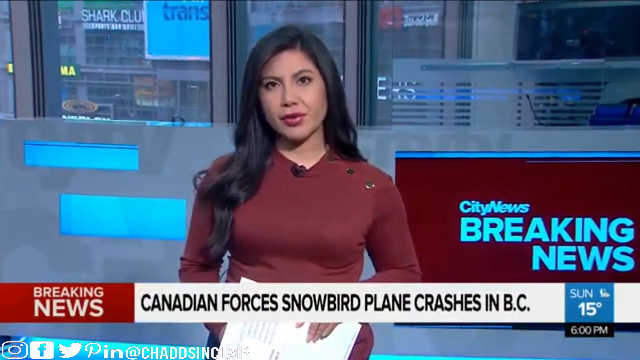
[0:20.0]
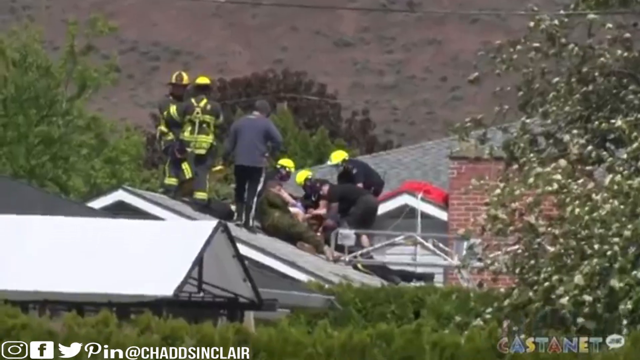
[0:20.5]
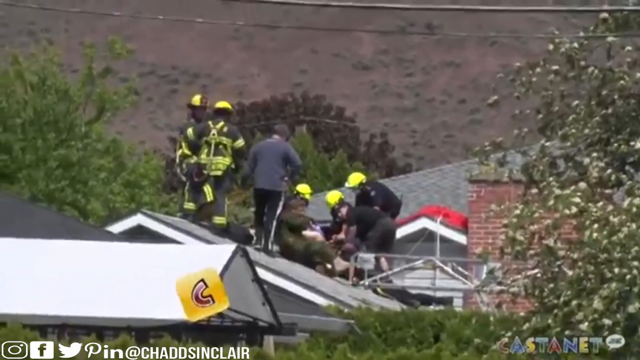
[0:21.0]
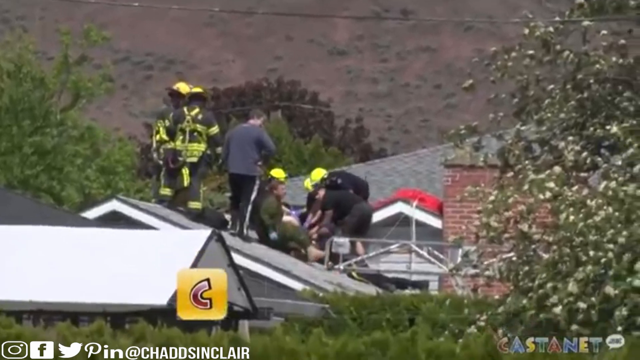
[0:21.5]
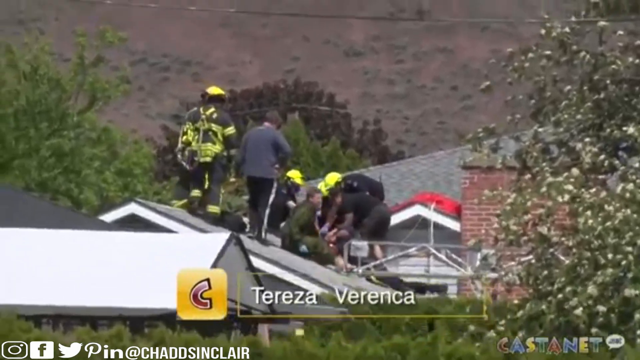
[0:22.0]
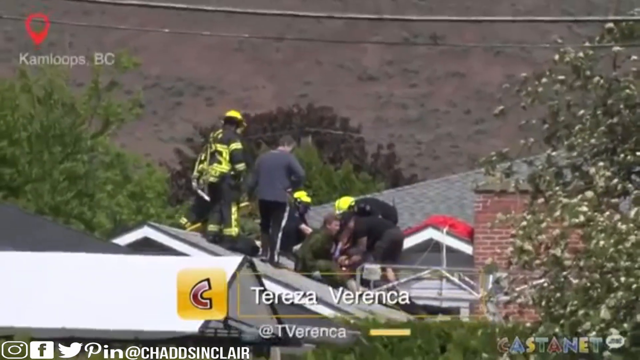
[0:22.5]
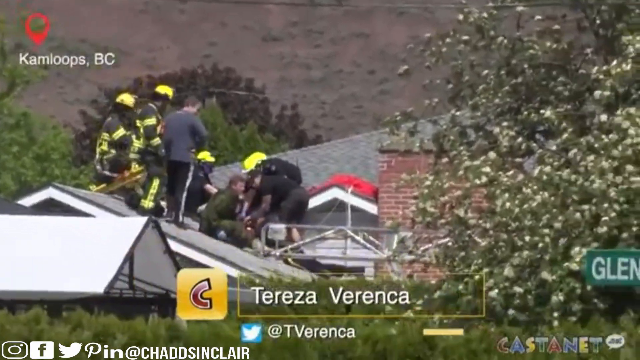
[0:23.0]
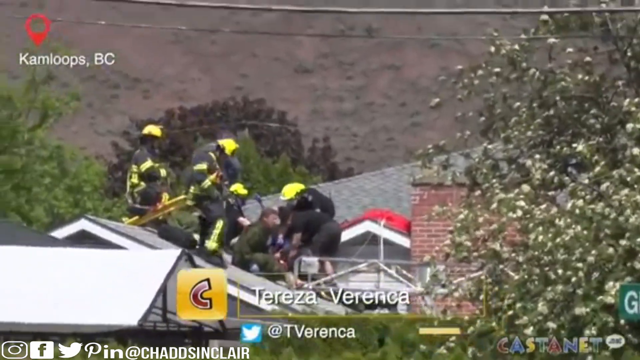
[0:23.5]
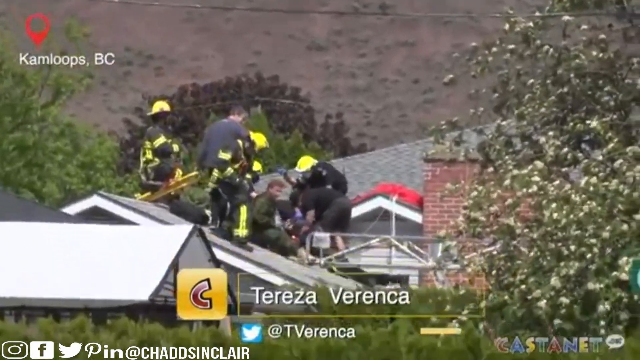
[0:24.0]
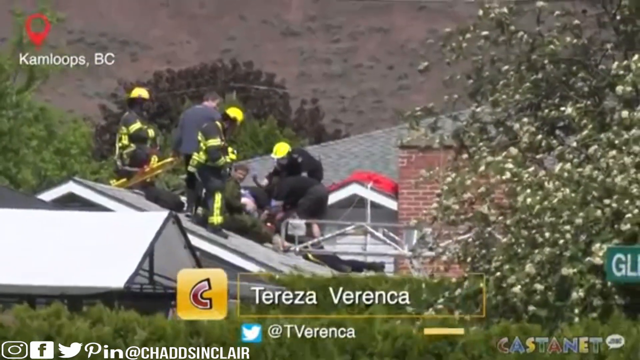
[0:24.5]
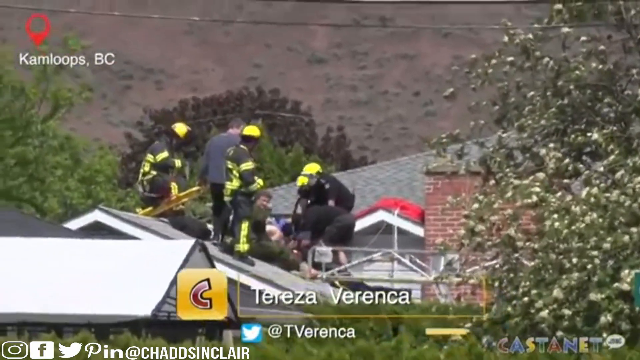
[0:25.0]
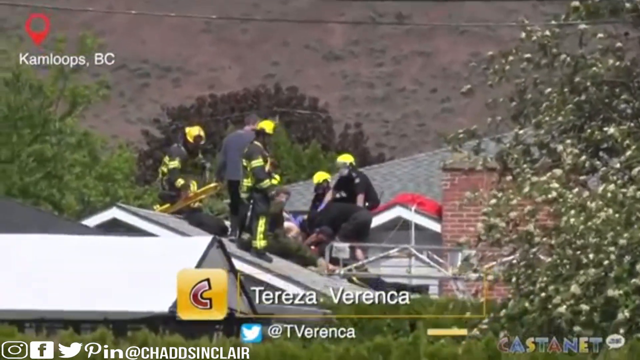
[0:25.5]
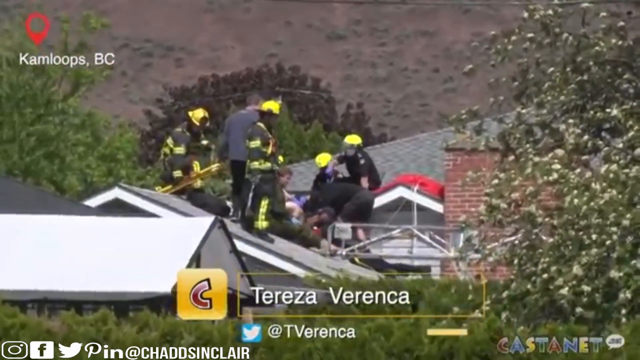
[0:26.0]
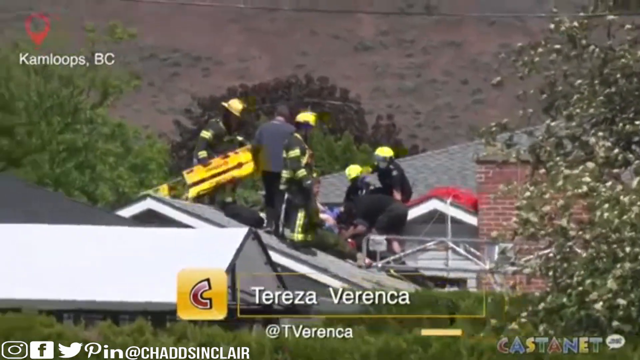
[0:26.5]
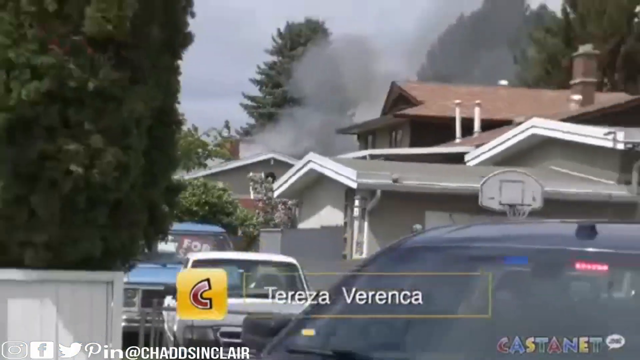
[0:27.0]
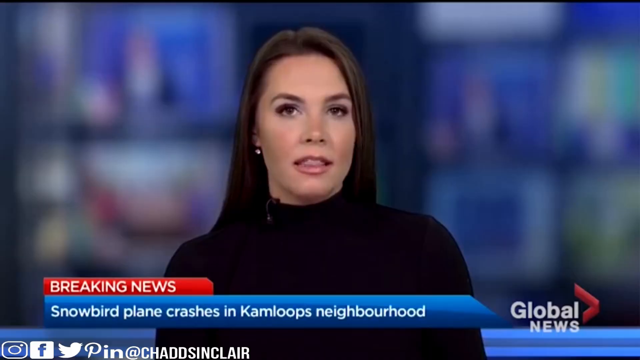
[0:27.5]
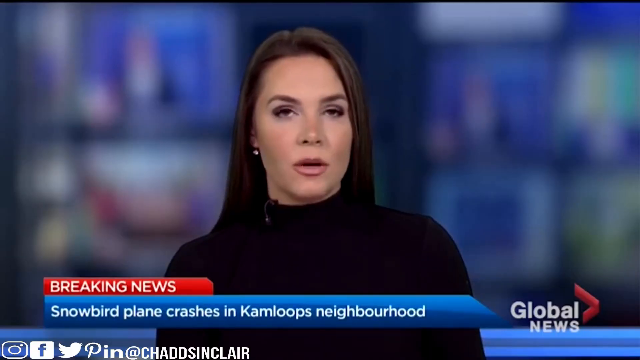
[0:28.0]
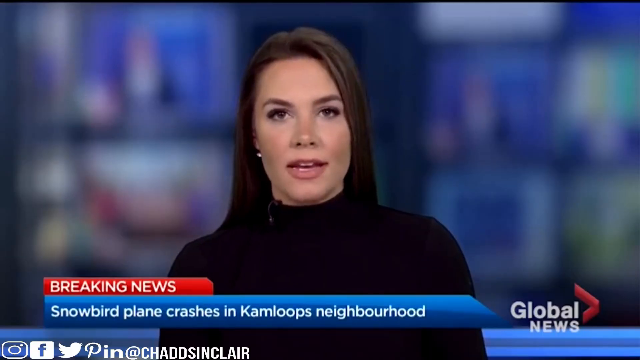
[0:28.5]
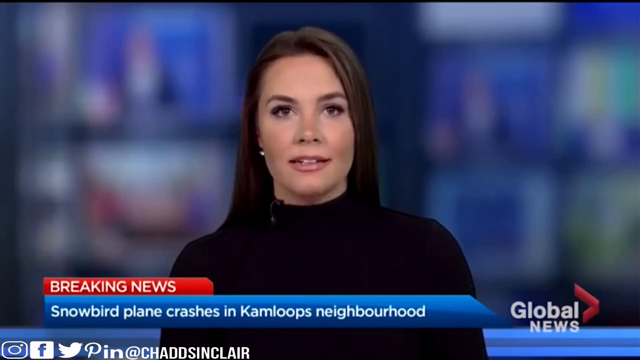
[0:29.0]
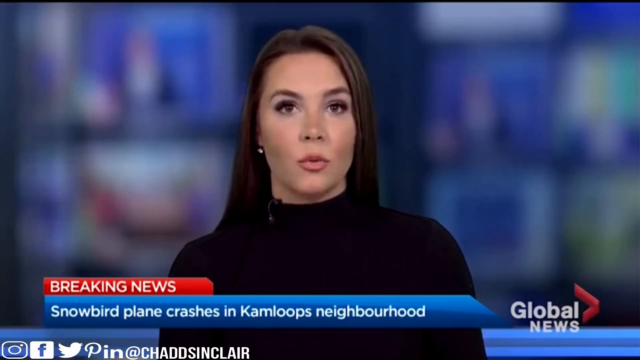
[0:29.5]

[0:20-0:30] At the bottom left of the screen is a burgundy rectangle reading "breaking NEWS," with "news" in all caps. Beside it, a gray rectangle reads "Canadian forces snowbird plane crash in B.C." in black bold letters. Right above that on the right is a burgundy rectangle with "city news" in blue letters and "BREAKING NEWS" in bold all-caps letters. Behind the Asian news lady is what looks to be a gray newsroom with controls and some blue rectangles, and to the left of that there are windows behind her. She wears a burgundy shirt with a microphone clipped onto it near her neck, and her hair falls past her shoulders to the middle of her back. Immediately after, the scene changes to what is apparently the crash site. Two firemen are there, along with men in plain gray clothing and black pants, one pair with a white stripe down it. Several of the men wear yellow hard hats, while two do not. There are trees around and a house. One of the firefighters picks up a yellow piece of metal. The scene then cuts to a Caucasian lady in a black turtleneck blouse who says a few words.